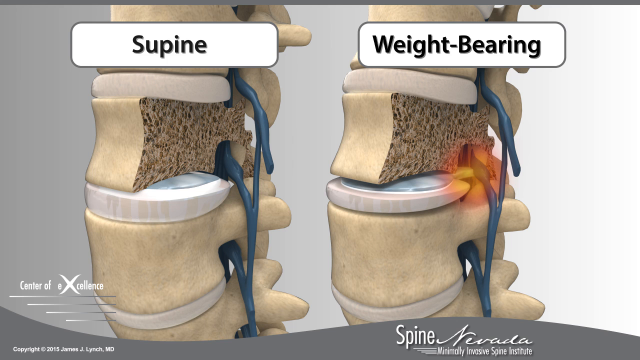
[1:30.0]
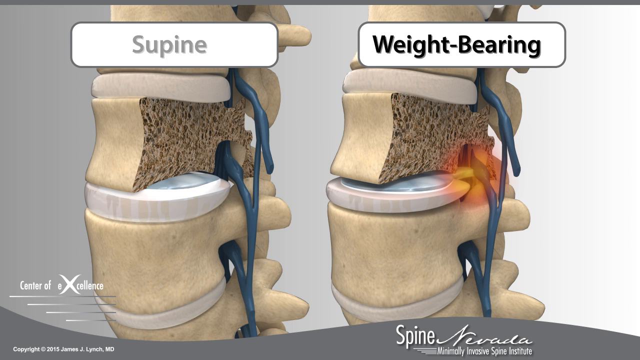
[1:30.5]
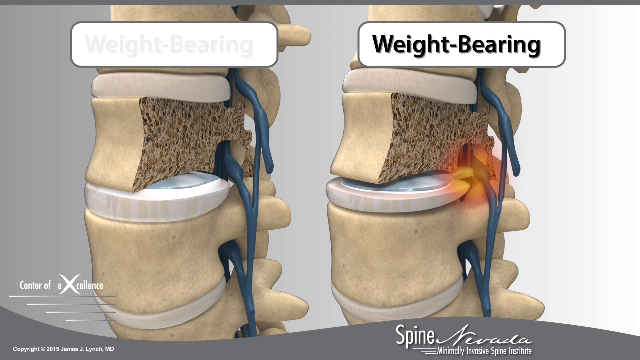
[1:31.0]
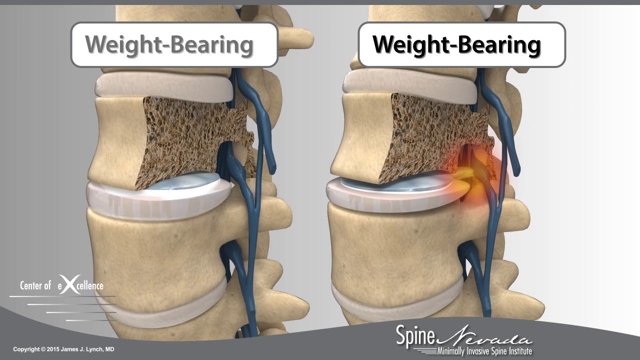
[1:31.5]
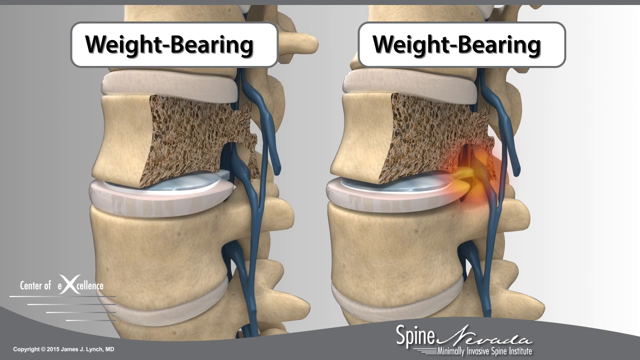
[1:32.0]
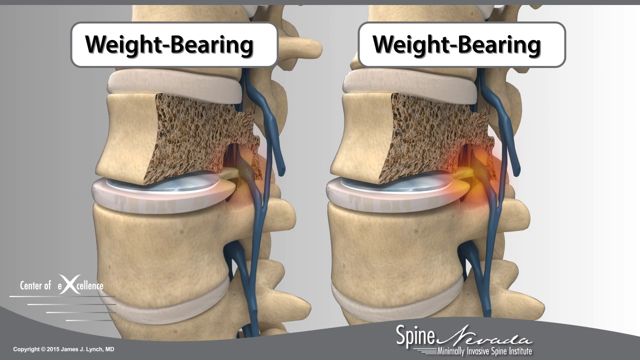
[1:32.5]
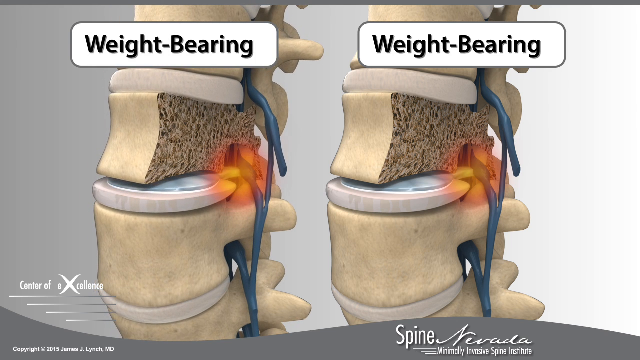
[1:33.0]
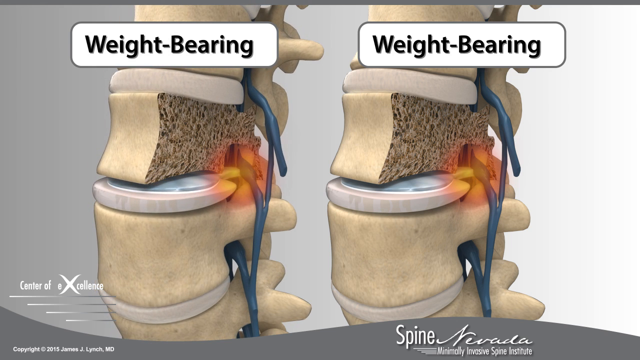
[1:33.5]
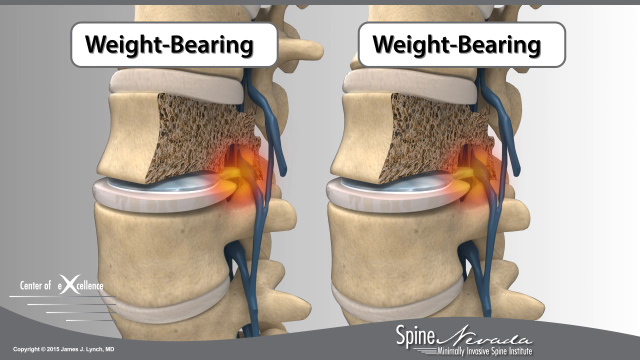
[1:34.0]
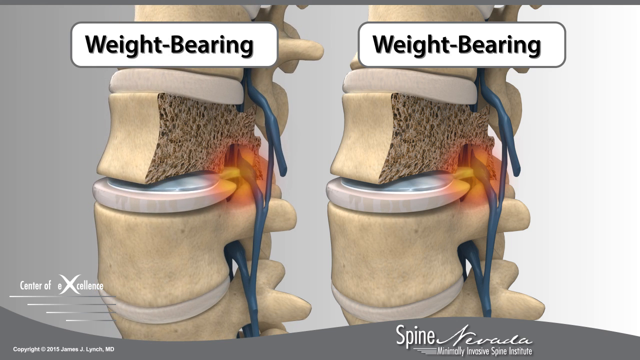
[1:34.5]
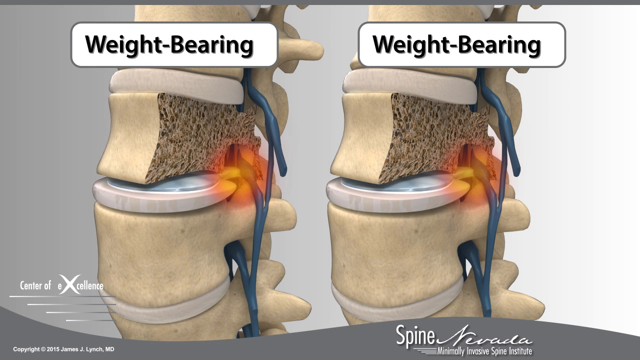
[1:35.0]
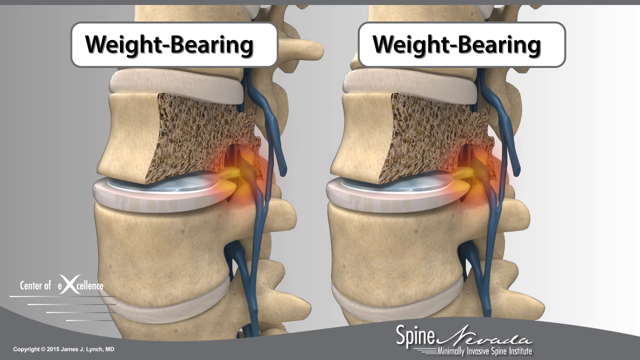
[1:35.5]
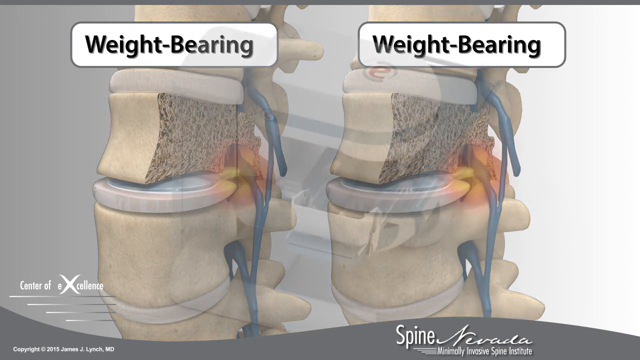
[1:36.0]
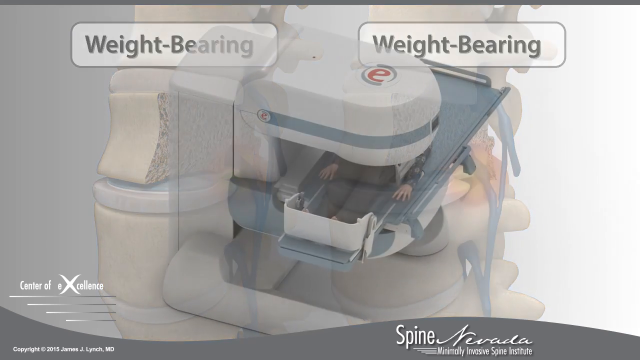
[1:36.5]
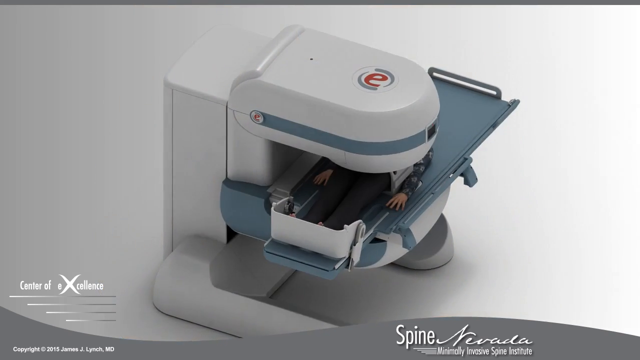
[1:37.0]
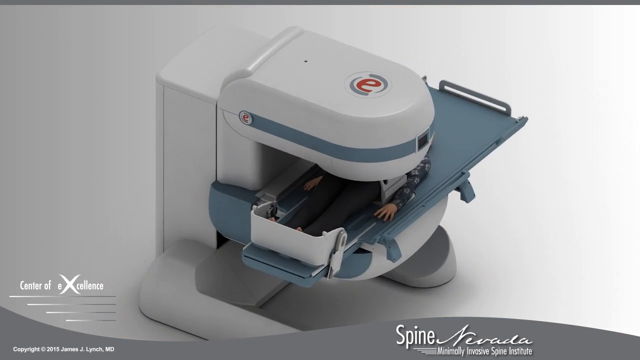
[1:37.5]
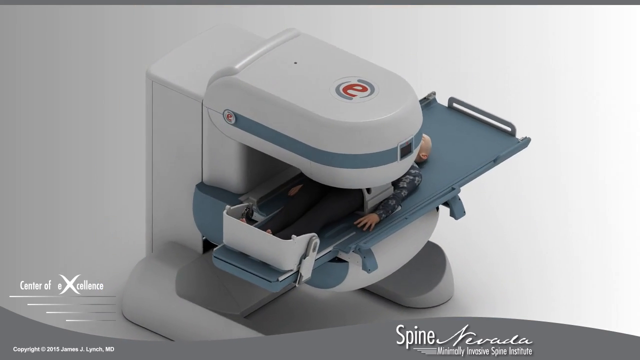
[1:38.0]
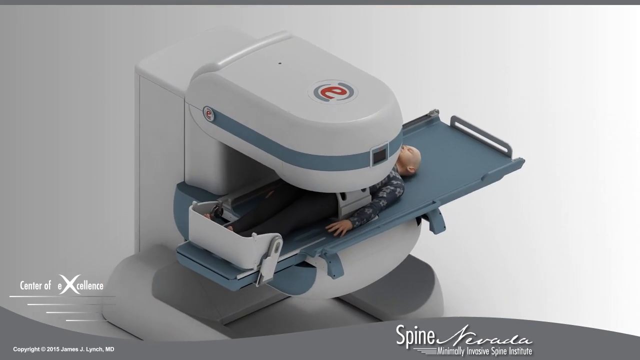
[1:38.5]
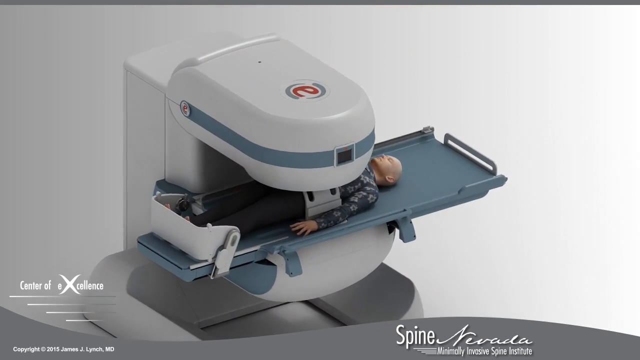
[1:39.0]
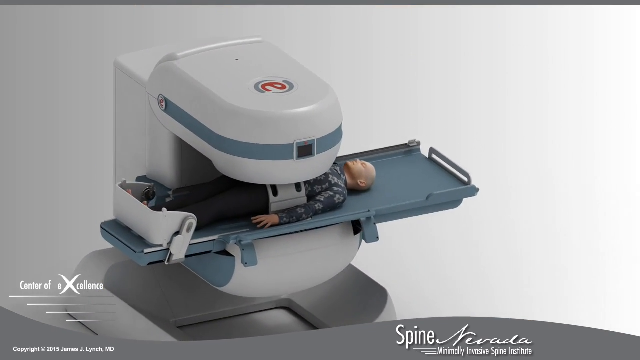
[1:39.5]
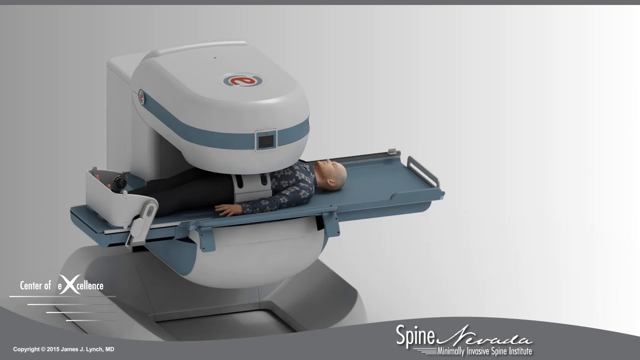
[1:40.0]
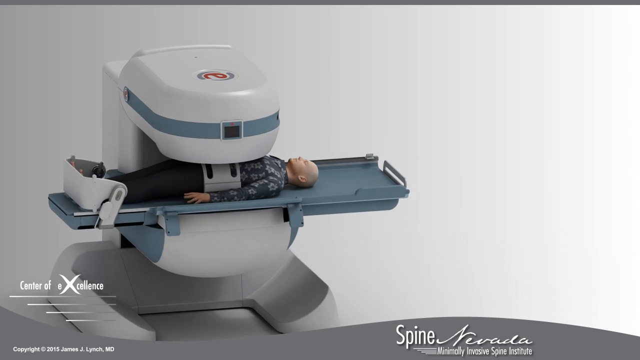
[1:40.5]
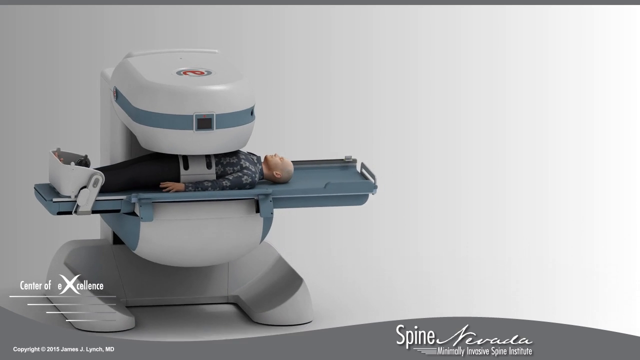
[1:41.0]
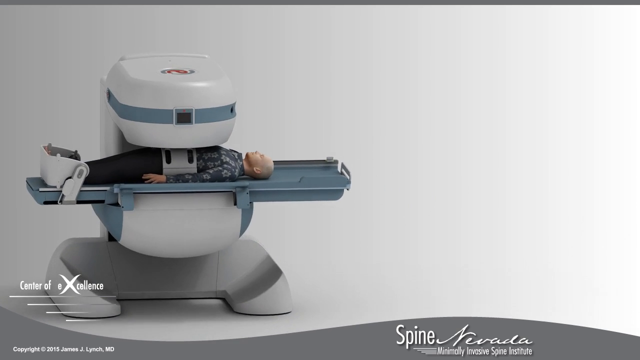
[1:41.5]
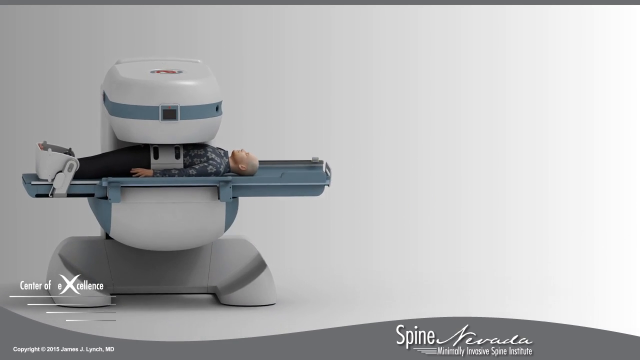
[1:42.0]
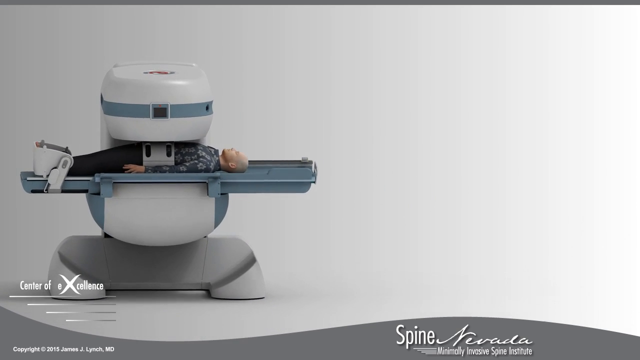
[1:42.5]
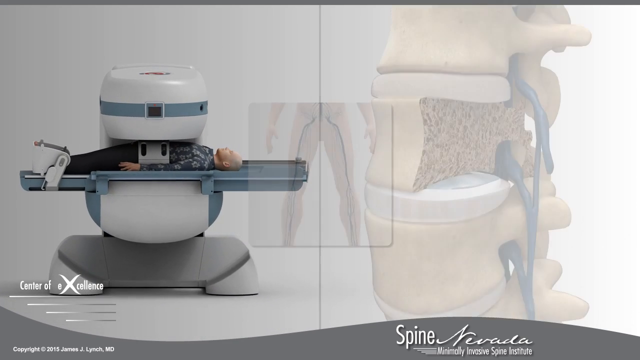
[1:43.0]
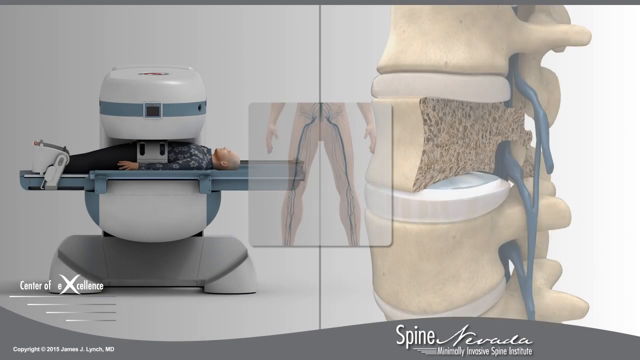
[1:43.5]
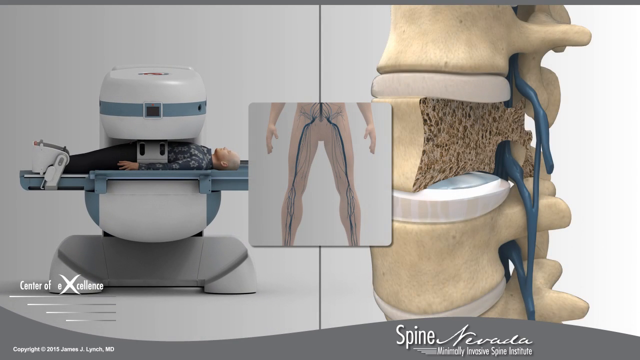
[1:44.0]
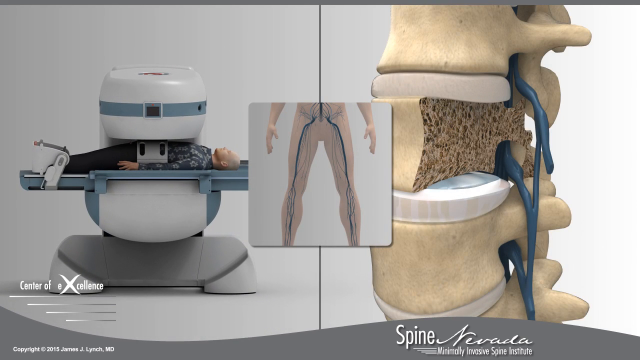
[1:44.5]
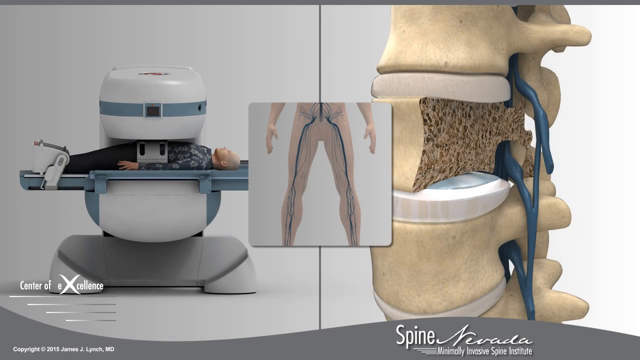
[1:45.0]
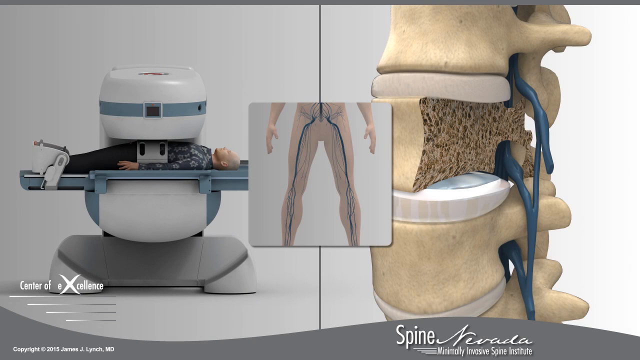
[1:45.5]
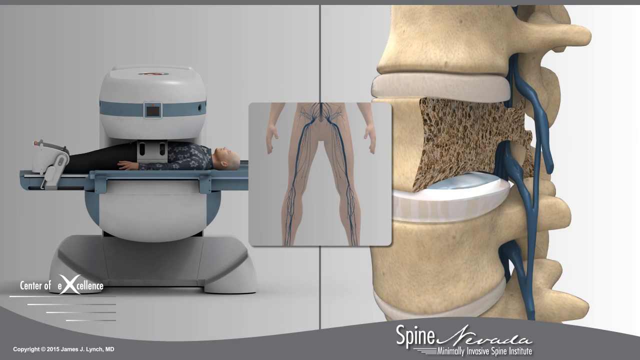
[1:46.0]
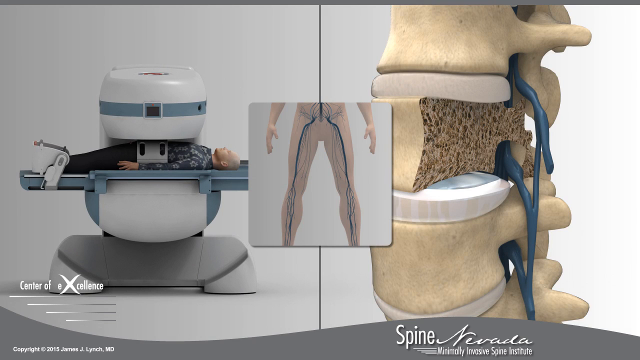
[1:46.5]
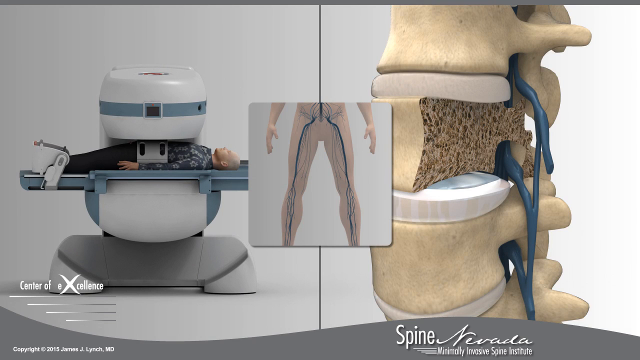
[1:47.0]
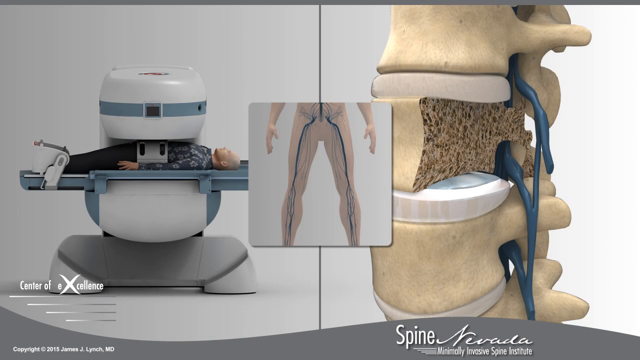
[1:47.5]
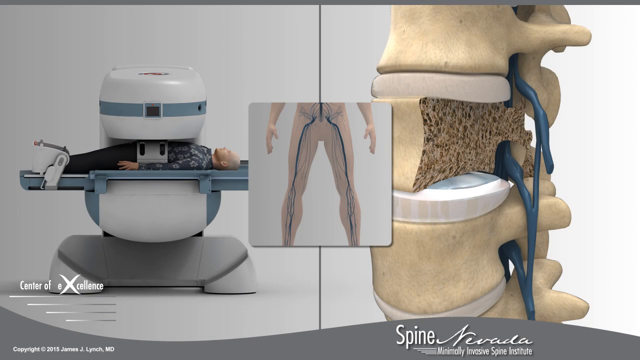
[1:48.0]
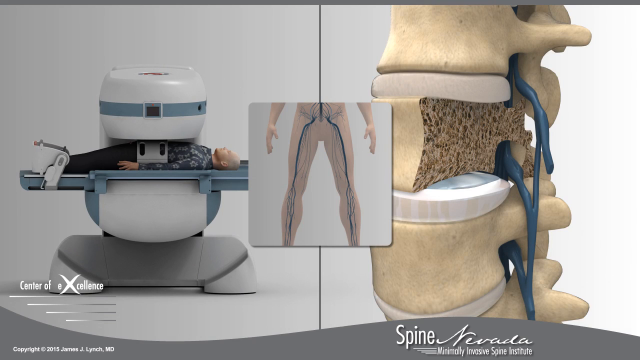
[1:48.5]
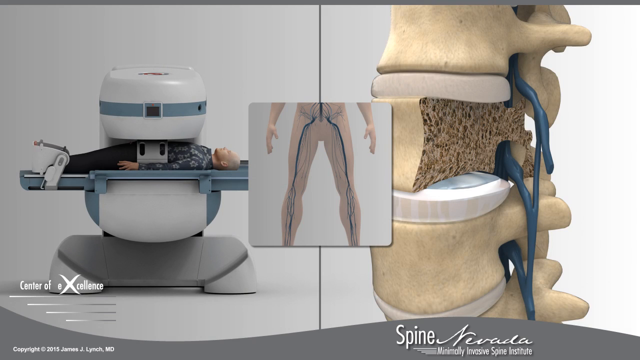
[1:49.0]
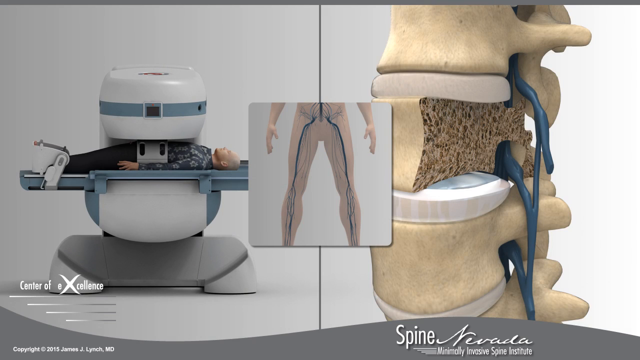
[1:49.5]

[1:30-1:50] Two models side by side are both labeled "weight-bearing"; the left one, previously labeled "supine", now reads "weight-bearing". After the label changes, the vertebrae of the left model slowly move to the right, a small gap appears in the vertebrae, and a red mark appears indicating some impingement. The image fades away and the overhead view returns, moving to the right over the machine where the person lies horizontally to get a scan. On the right side is the vertebra model, and in the center is a frontal view of the bottom half of a person with the nerves running through the legs visible. On the left side, the machine holding the horizontal person starts to tip to the left and raise the person into a more vertical position.